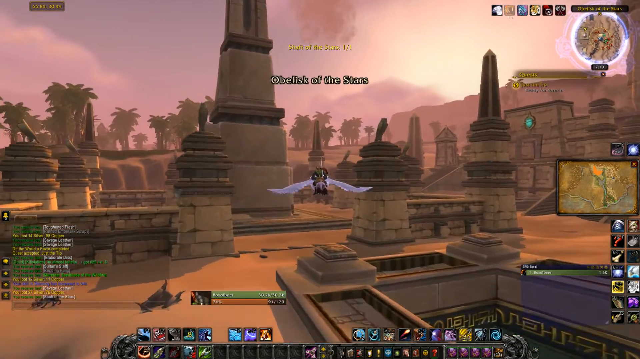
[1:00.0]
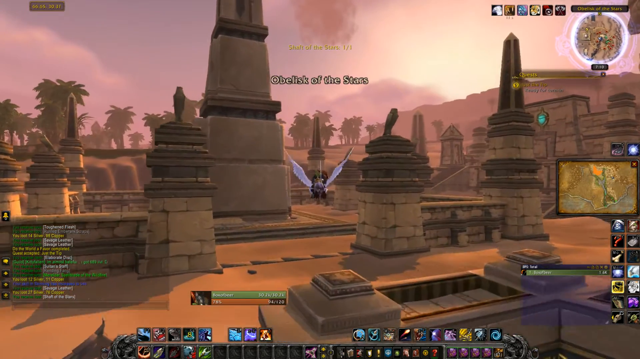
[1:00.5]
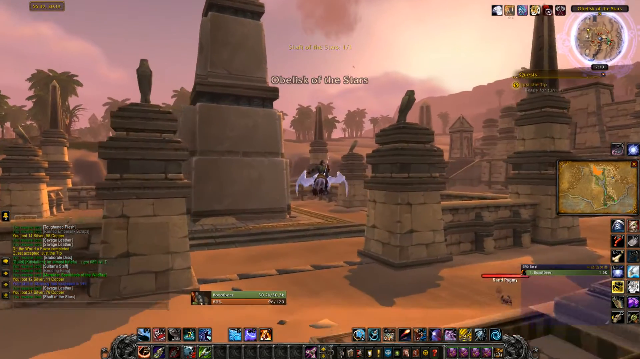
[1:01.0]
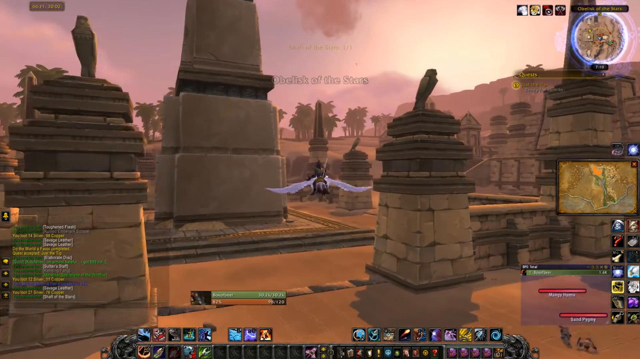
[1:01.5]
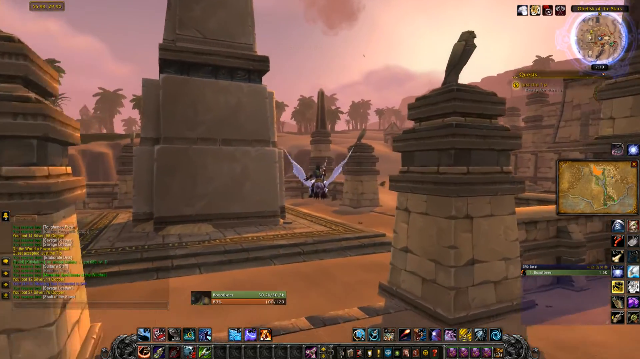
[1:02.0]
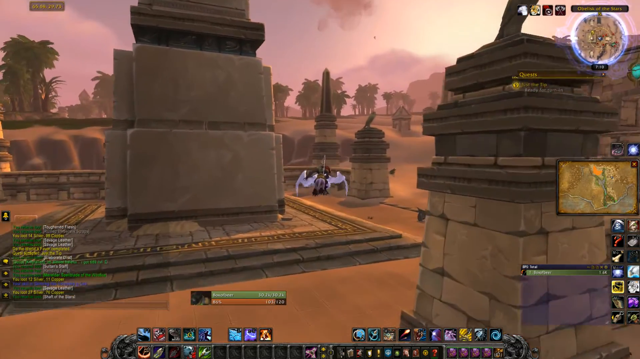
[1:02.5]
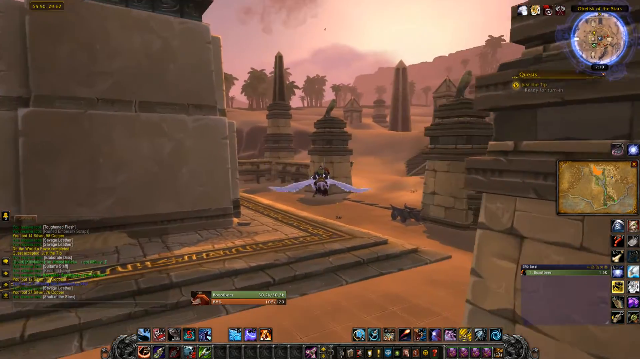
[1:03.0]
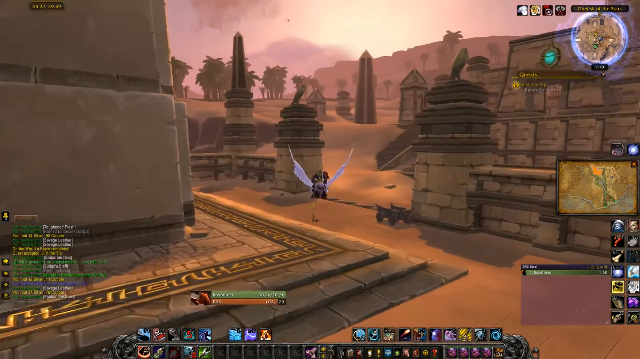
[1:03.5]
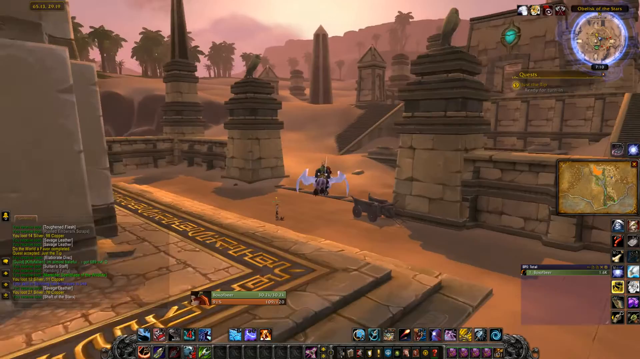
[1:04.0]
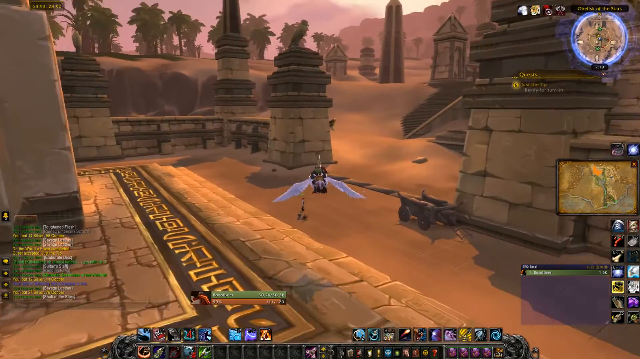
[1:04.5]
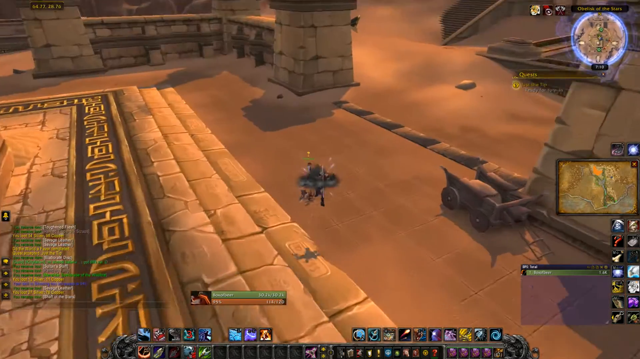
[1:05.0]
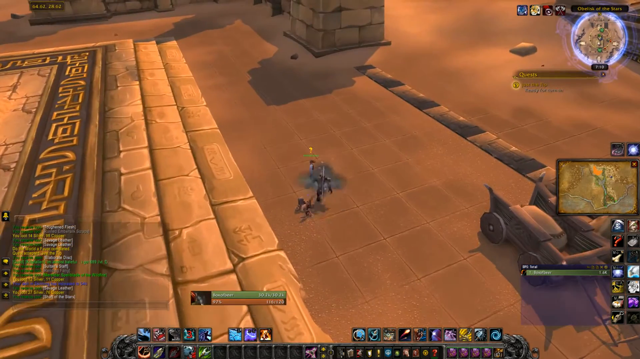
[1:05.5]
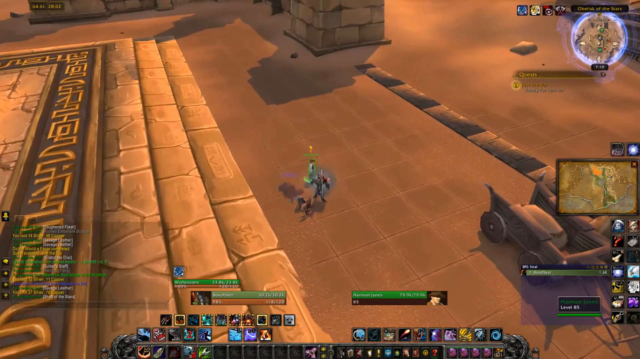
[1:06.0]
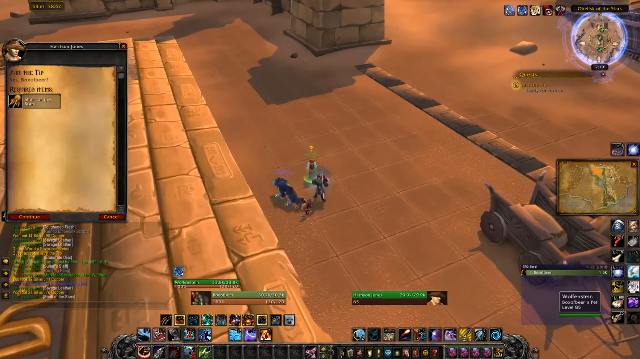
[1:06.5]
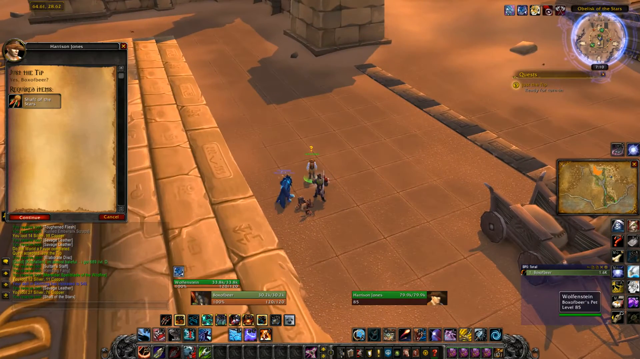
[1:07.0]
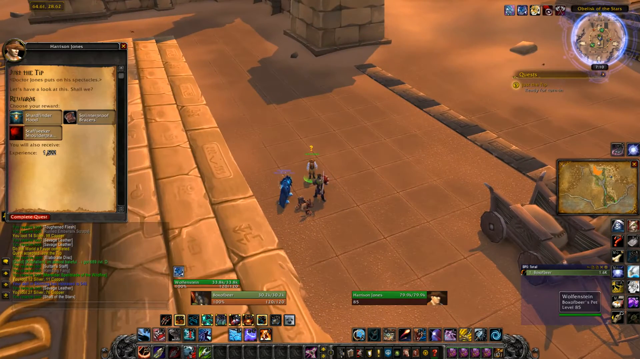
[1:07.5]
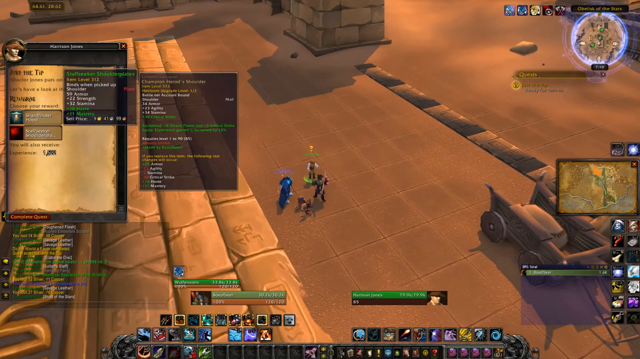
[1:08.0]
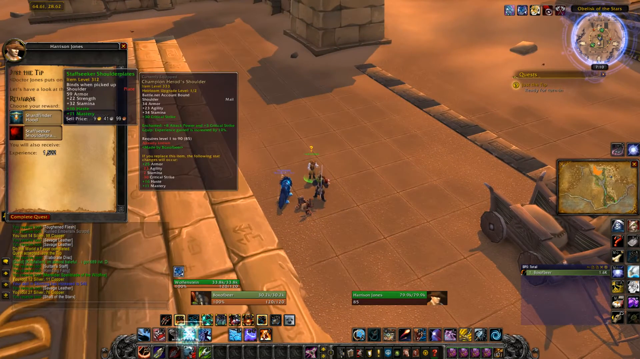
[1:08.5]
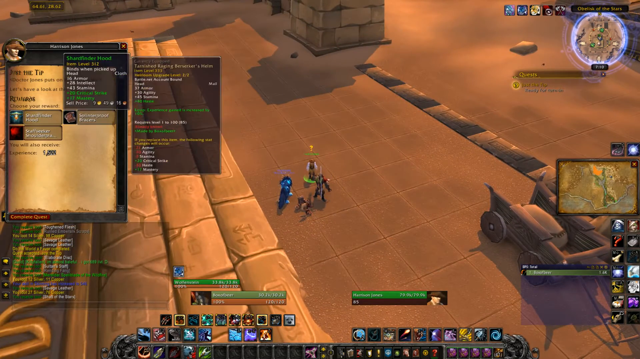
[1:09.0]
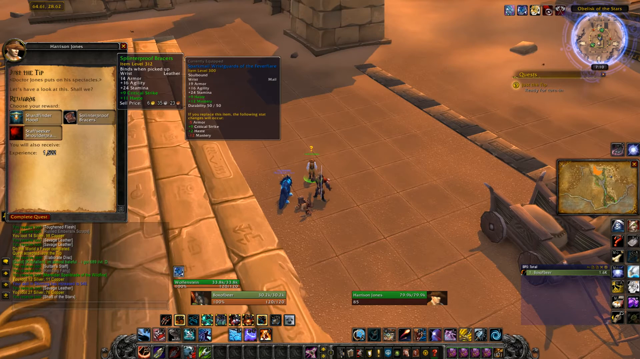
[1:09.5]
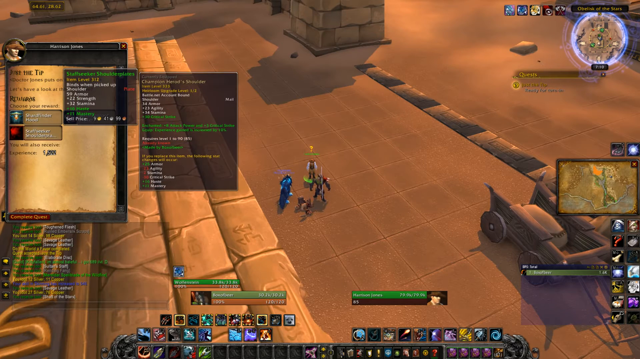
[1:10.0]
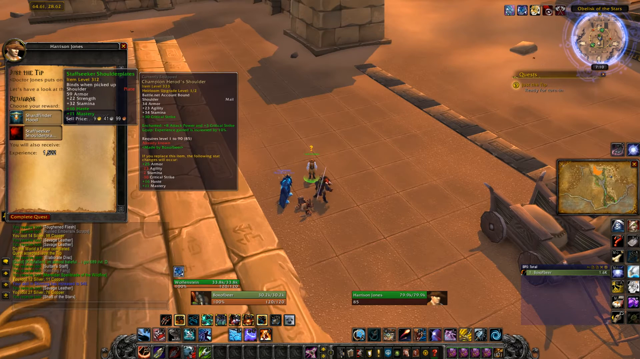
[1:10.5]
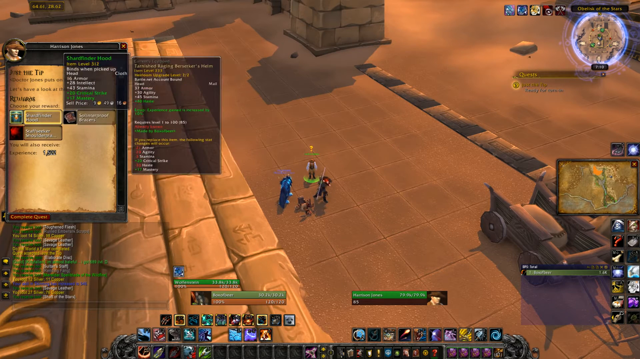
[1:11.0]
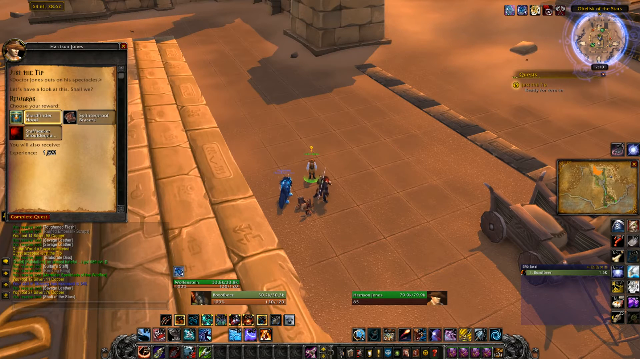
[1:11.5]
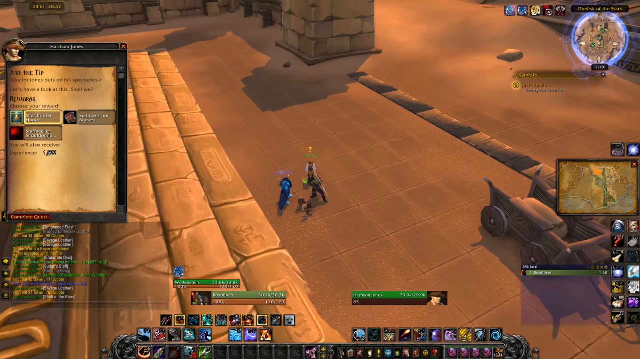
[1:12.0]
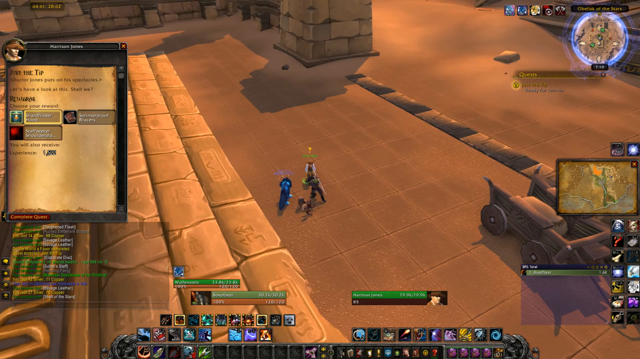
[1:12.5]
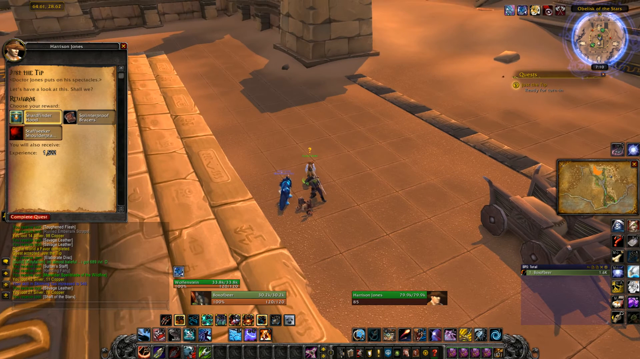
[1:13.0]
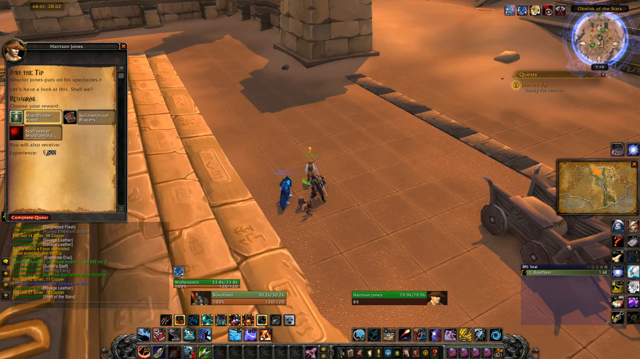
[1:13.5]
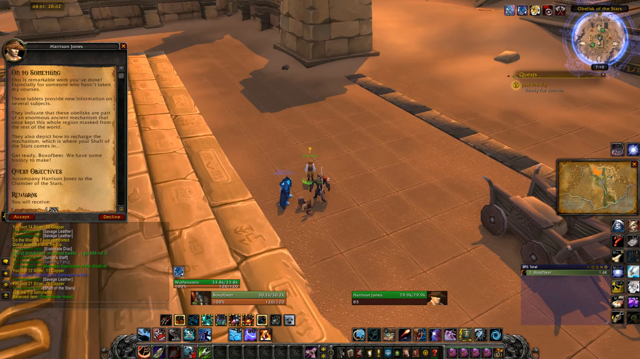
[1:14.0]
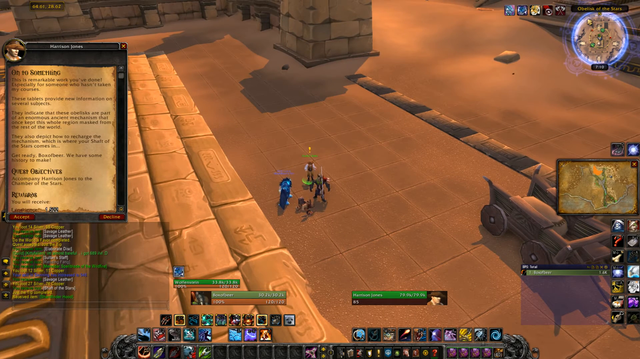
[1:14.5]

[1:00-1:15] The combat and killing continue. The white mythical creature flies through the air, all around the city, and finally lands. It changes to blue when it lands on the ground, and the man jumps off the mythical creature. The background is overcast, cloudy, gloomy and doom-filled. There are lots of caves and lots of stone fixtures, and the city looks like it is made mostly of stone and sand.